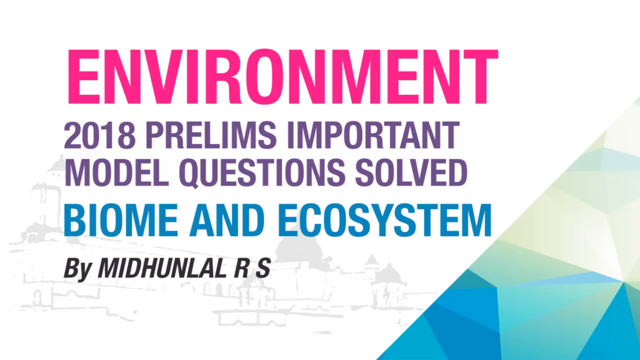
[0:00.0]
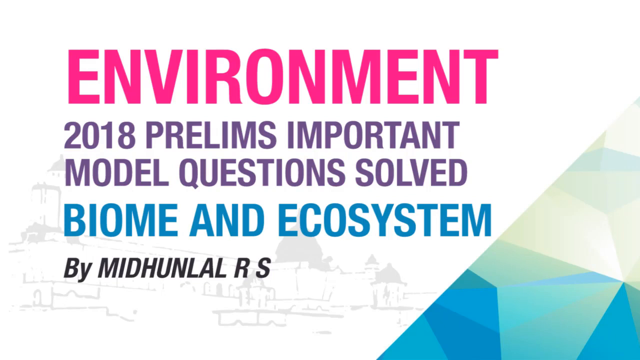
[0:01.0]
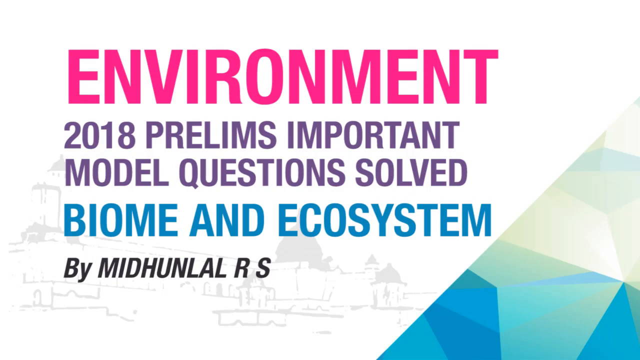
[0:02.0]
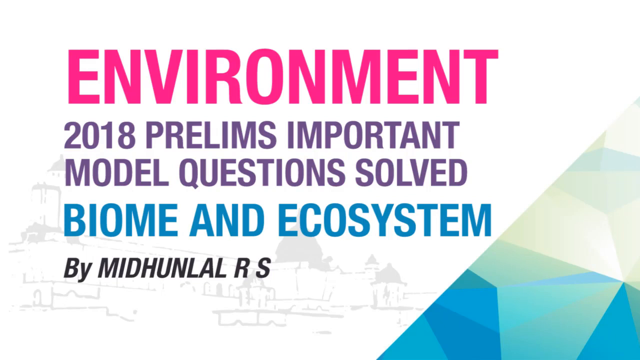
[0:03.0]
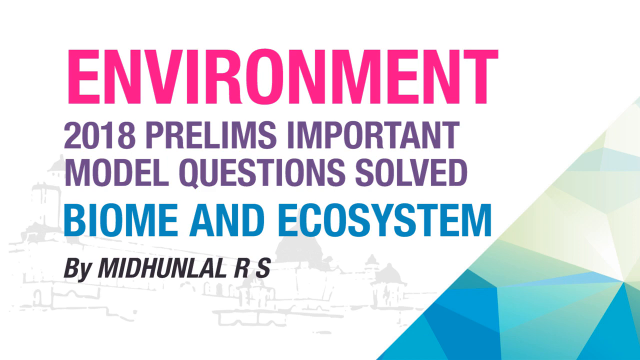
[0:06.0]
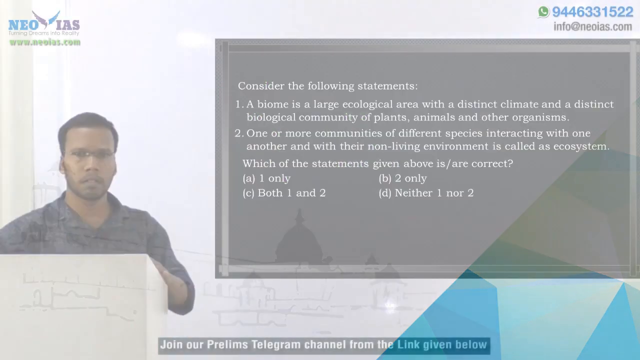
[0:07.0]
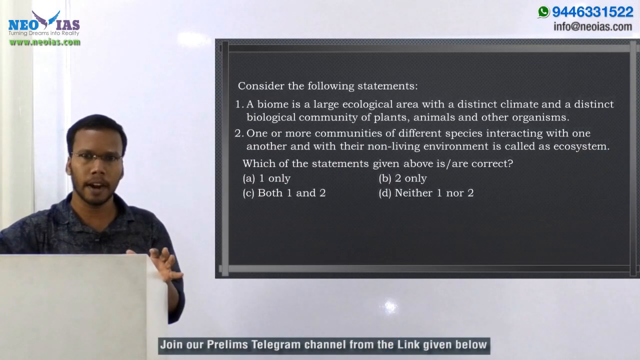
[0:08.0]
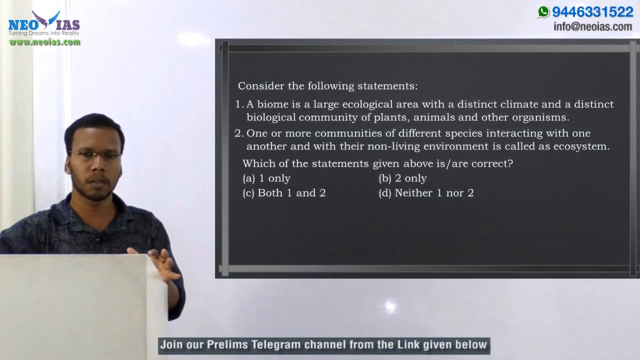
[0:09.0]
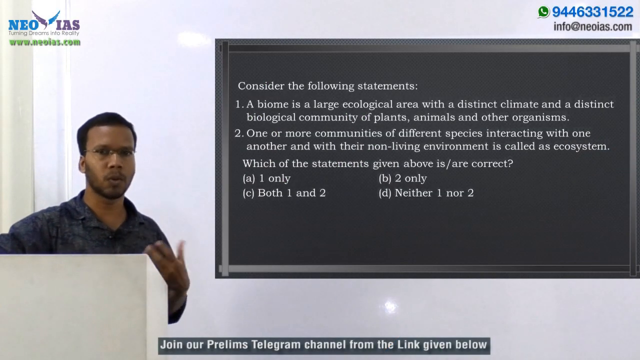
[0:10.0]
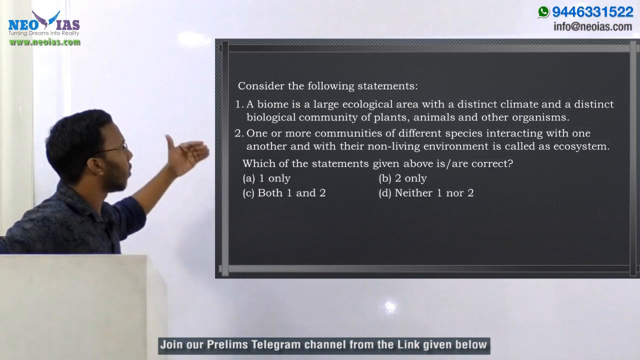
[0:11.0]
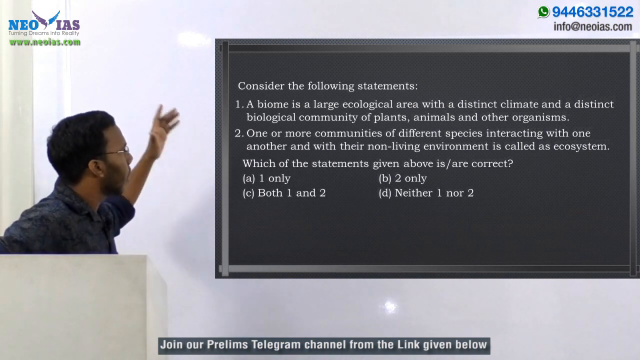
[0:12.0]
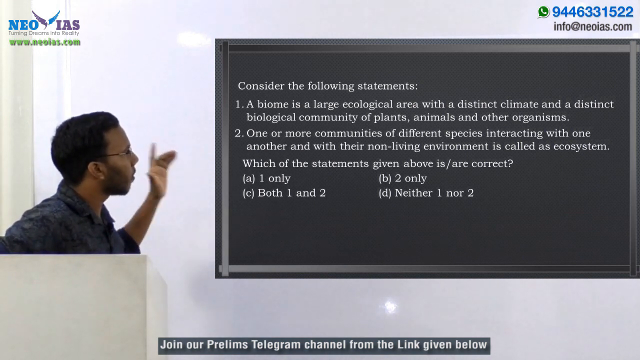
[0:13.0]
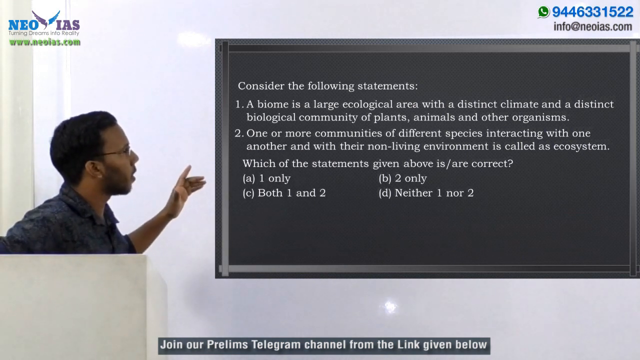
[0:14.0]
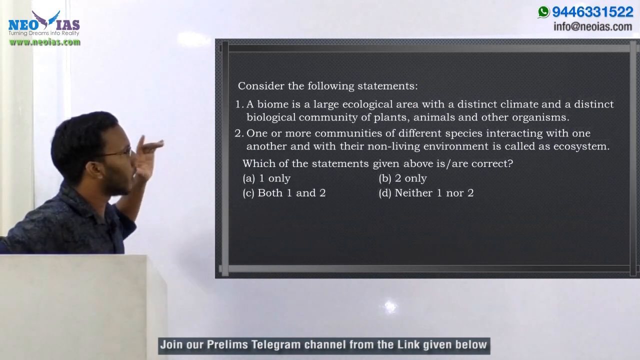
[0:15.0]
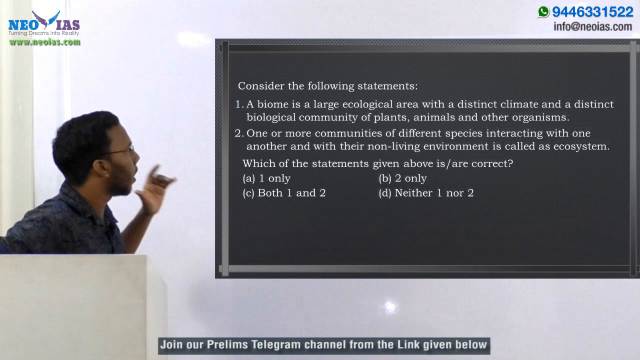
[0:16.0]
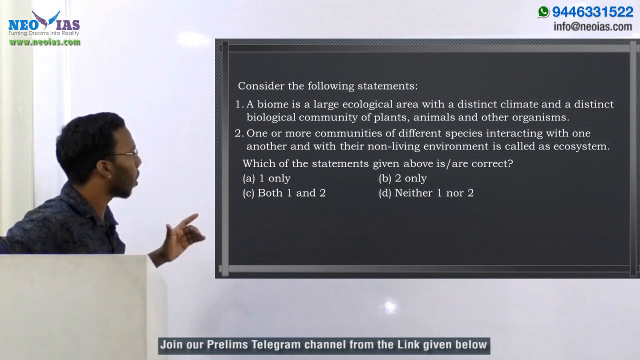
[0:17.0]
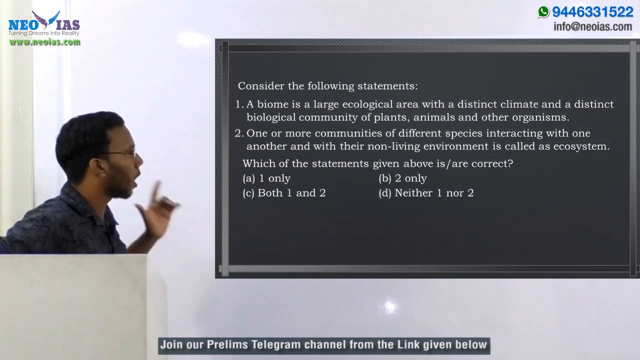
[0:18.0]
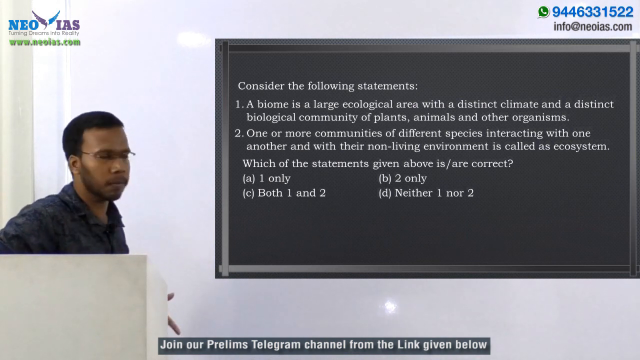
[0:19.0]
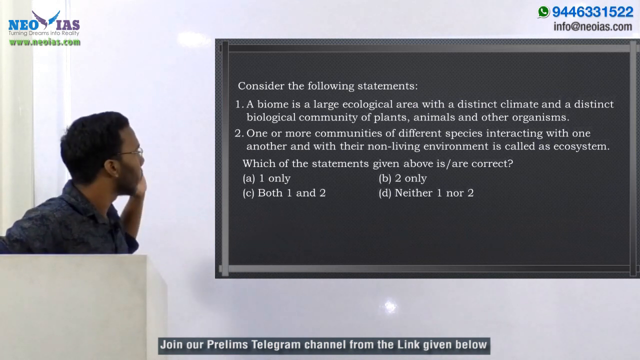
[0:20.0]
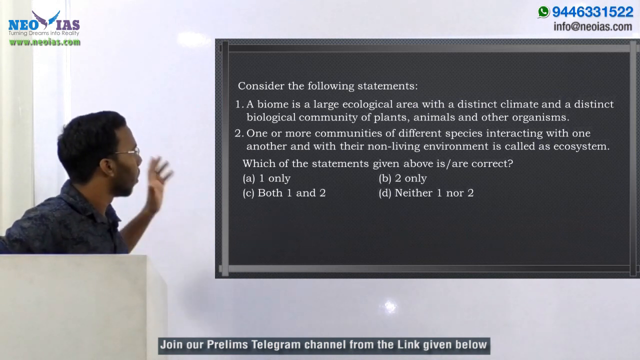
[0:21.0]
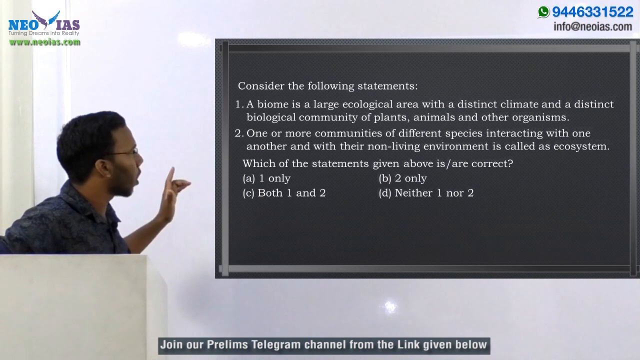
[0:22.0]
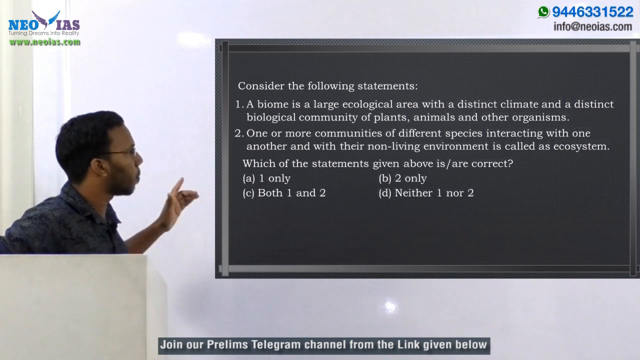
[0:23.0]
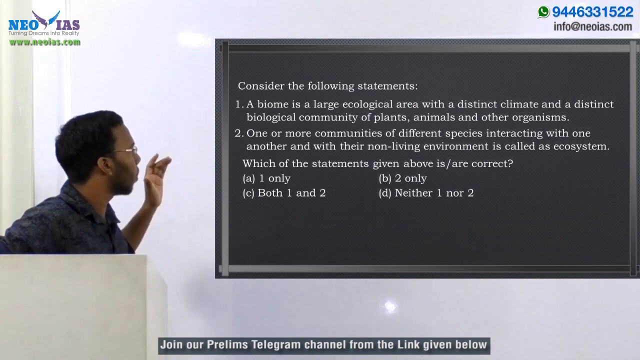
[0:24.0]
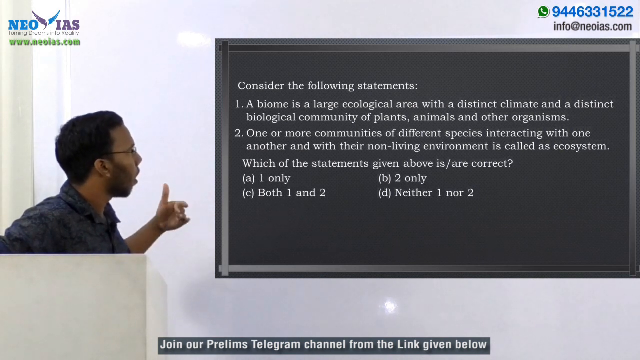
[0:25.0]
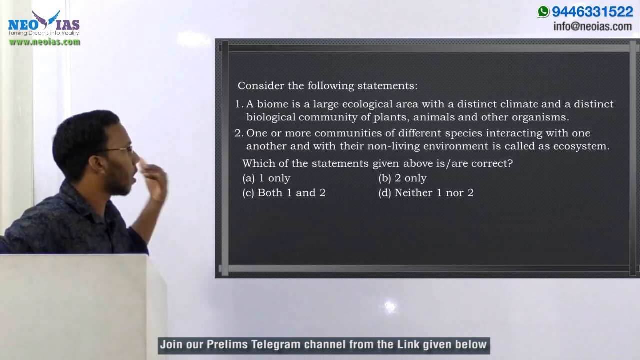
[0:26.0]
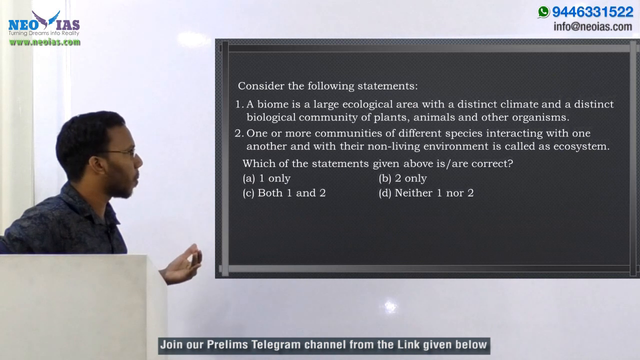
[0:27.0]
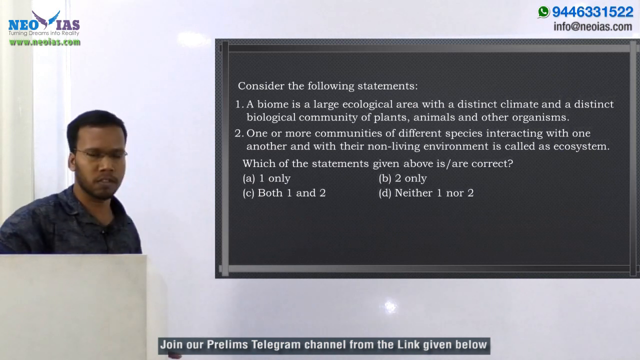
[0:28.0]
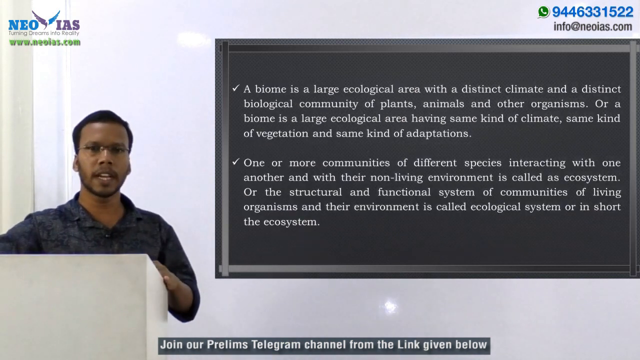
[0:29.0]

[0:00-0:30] Simple multicolored text appears on screen: "environment" in pink, and underneath it, slightly smaller and in a lavender-like color, "2018 prelims, important." The next line reads "model question solved," and the color then switches to a greenish blue for "biome and ecosystem." Below that, smaller and in black, is "by MIDHUNLAL RS," with the name in capital letters. A watermark in the background looks like Jerusalem or some kind of temple, drawn simply, with a few different ones. On the right side there is a diagonal cut line with freestanding geometric shapes, including triangles and parallelograms in beige, darker greens and lighter greens. A man then appears giving what seems to be a seminar; he looks like a Black kid, and he is at a white pillar of some sort, talking. To the right is a board about a biome: one statement describes a biome as a large ecological area, and a second mentions one or more communities of different species. There is a multiple-choice question with four options to choose from. He turns and gestures as he speaks.